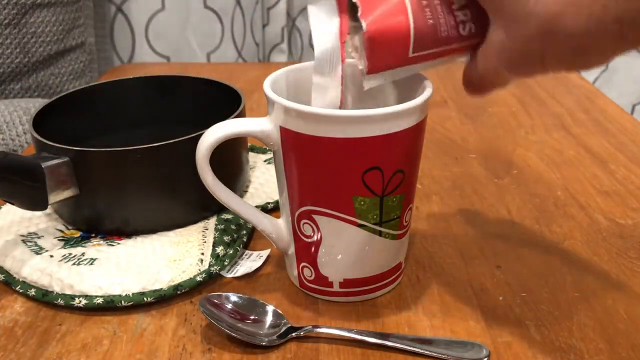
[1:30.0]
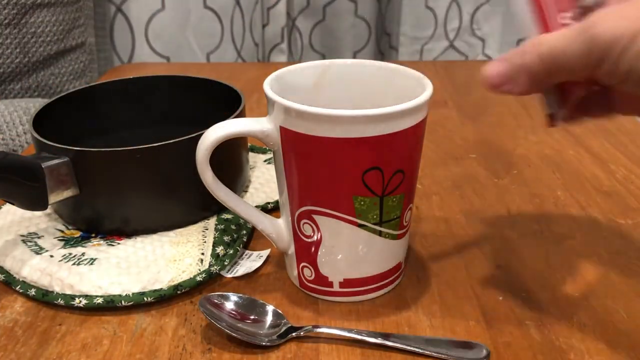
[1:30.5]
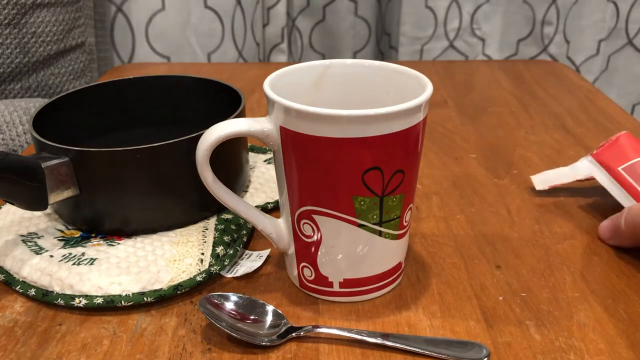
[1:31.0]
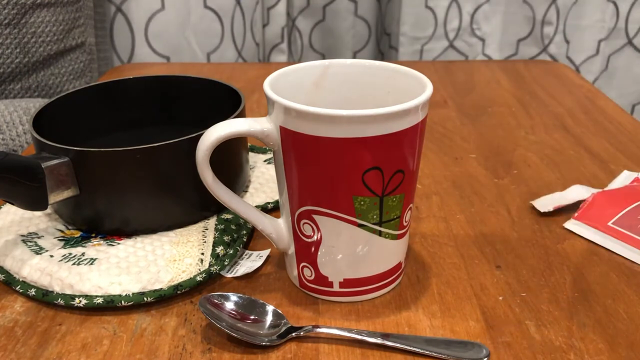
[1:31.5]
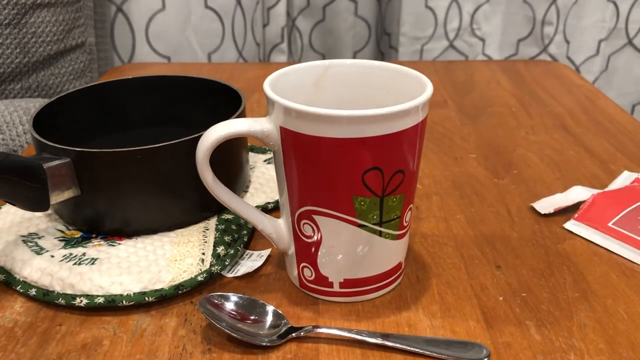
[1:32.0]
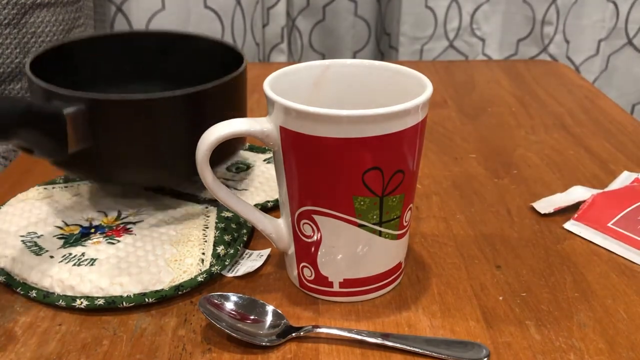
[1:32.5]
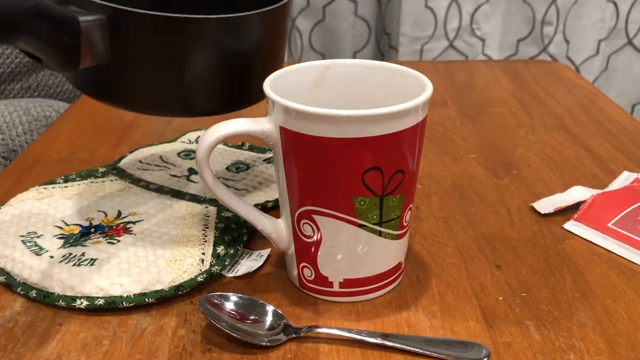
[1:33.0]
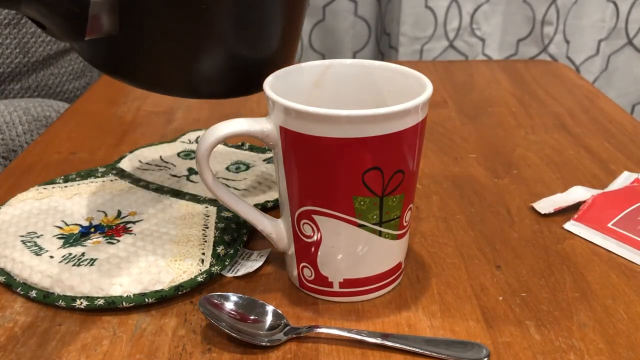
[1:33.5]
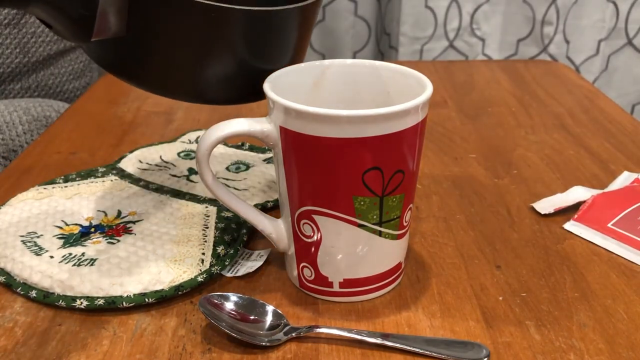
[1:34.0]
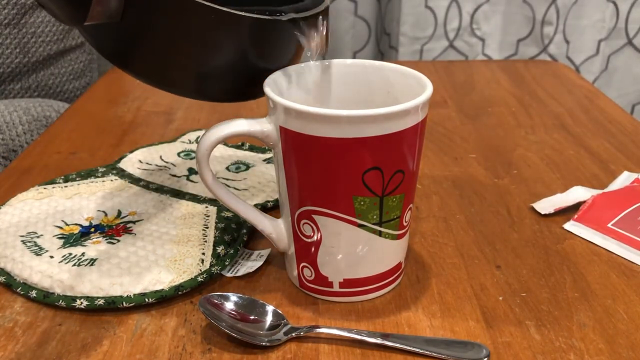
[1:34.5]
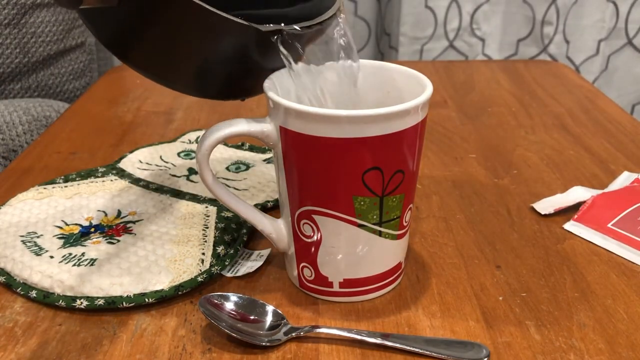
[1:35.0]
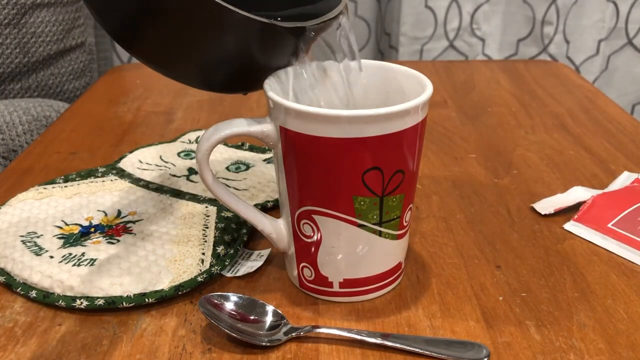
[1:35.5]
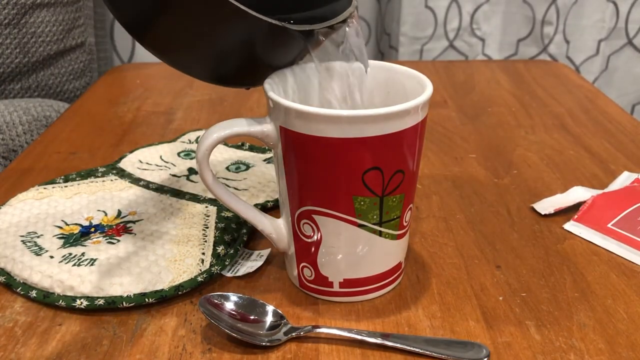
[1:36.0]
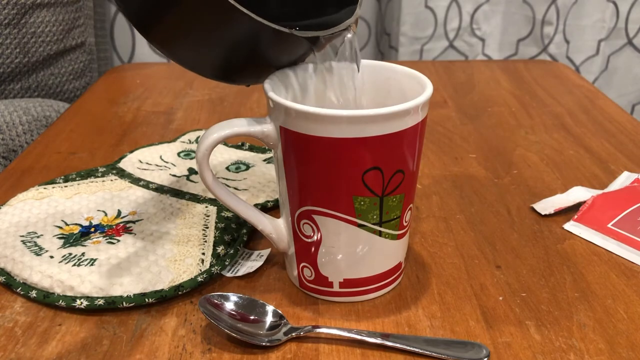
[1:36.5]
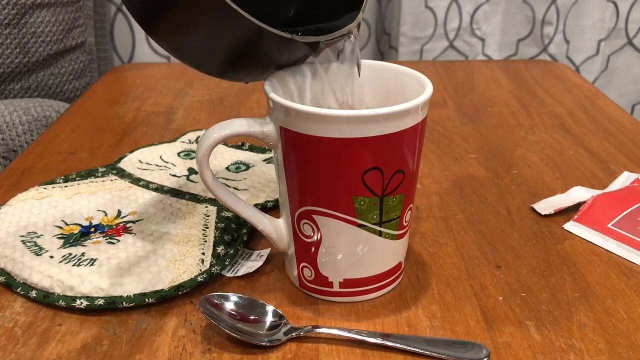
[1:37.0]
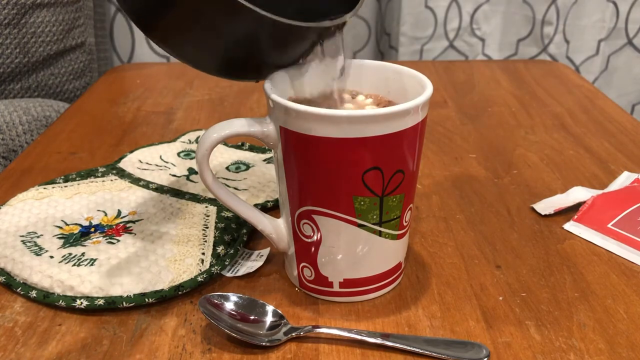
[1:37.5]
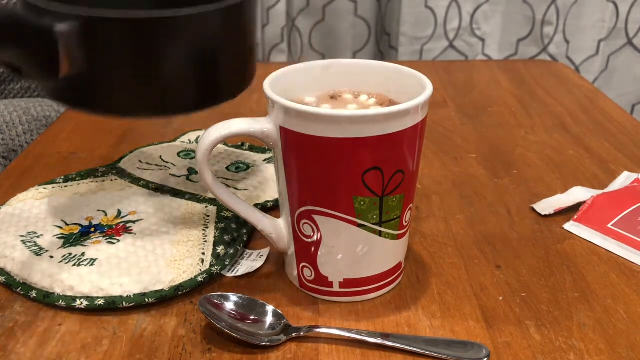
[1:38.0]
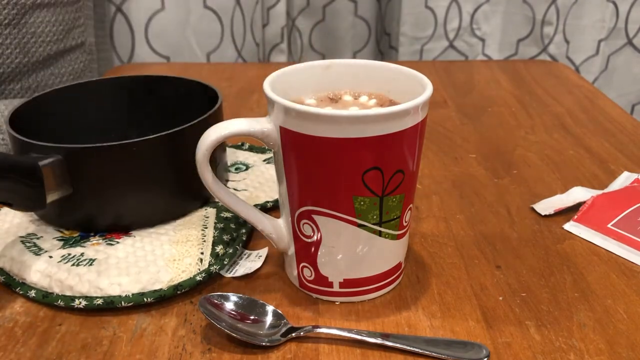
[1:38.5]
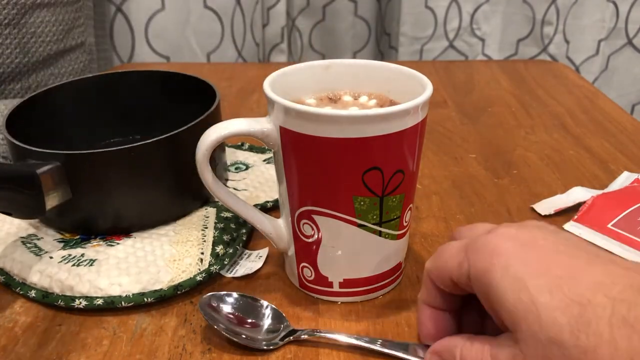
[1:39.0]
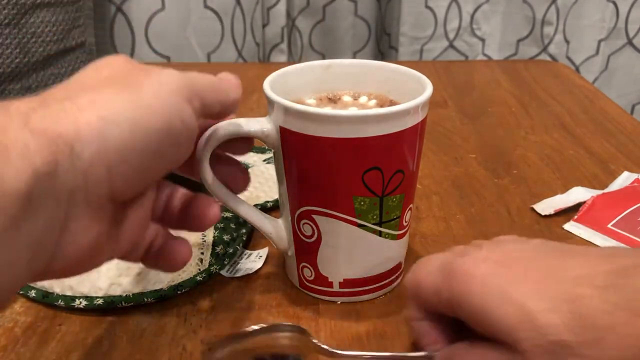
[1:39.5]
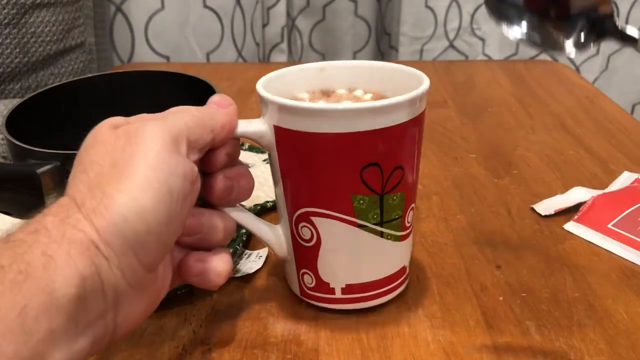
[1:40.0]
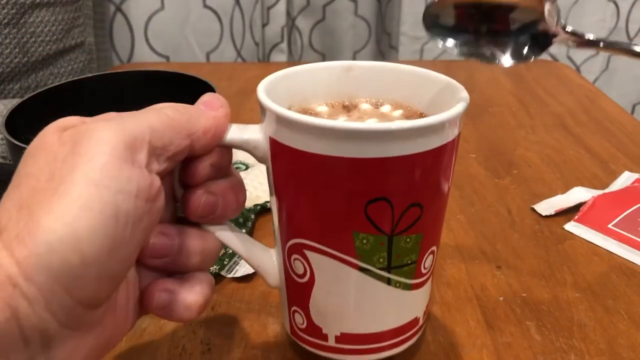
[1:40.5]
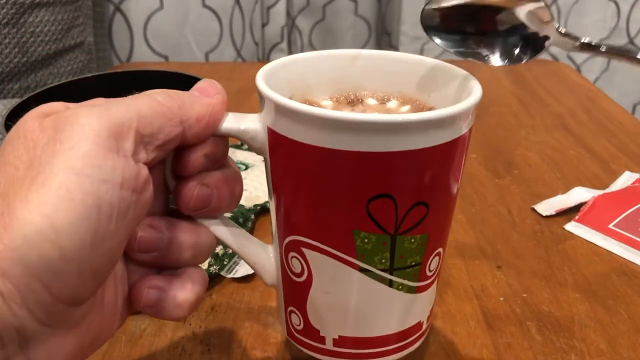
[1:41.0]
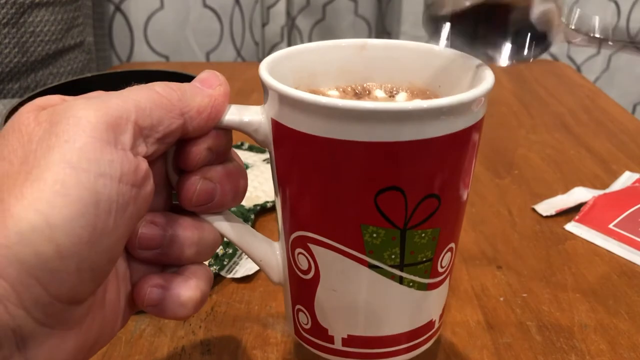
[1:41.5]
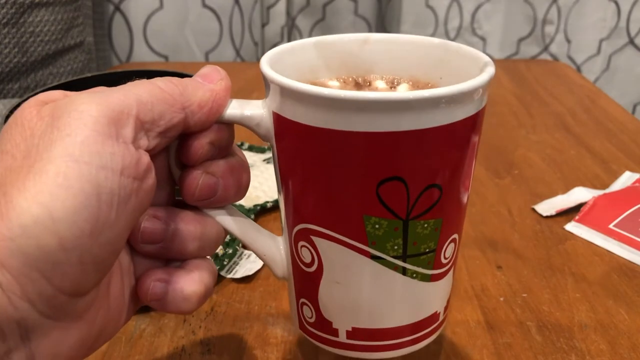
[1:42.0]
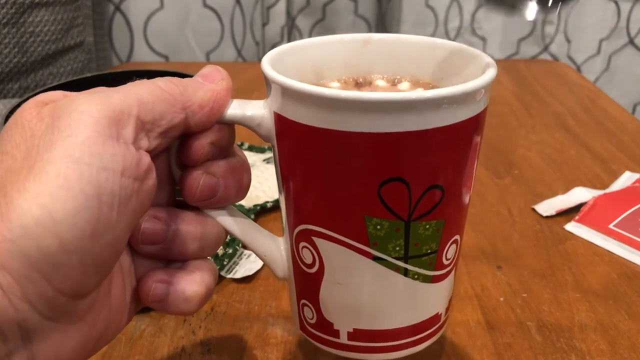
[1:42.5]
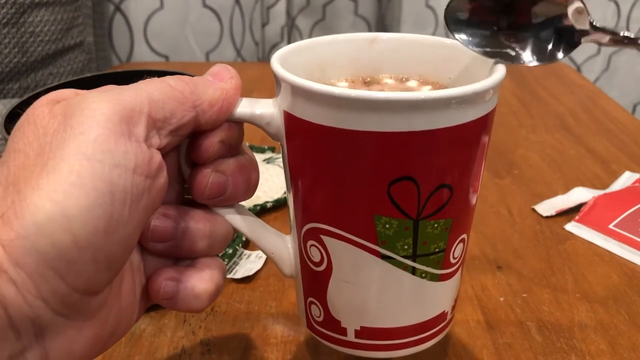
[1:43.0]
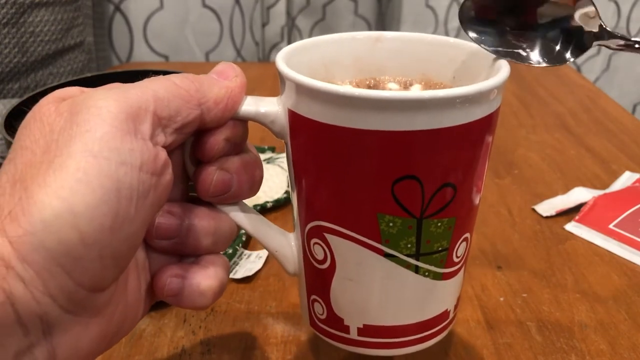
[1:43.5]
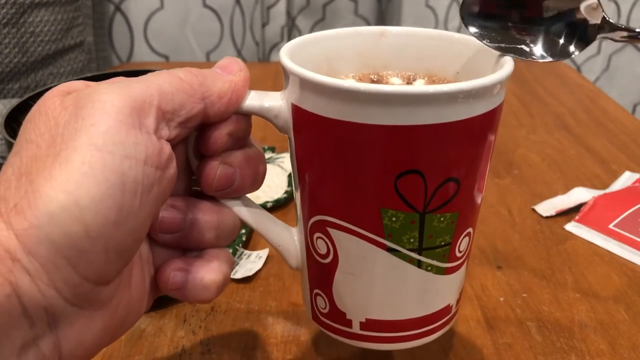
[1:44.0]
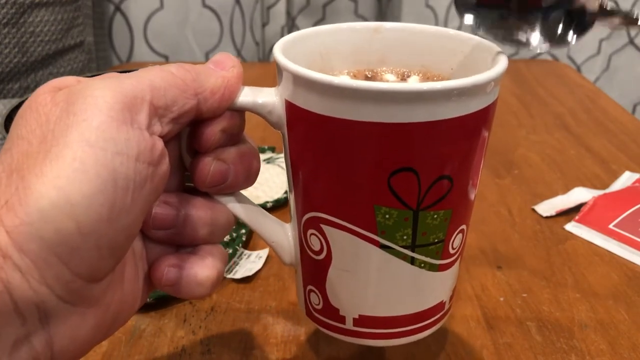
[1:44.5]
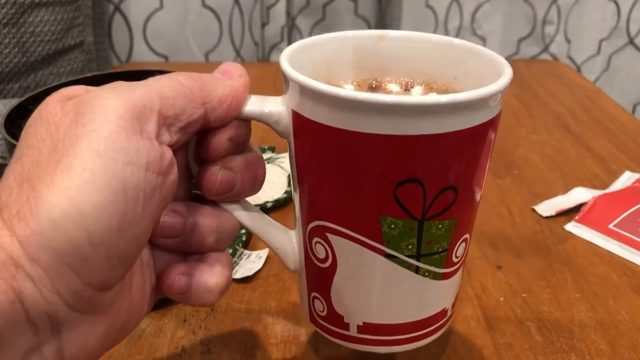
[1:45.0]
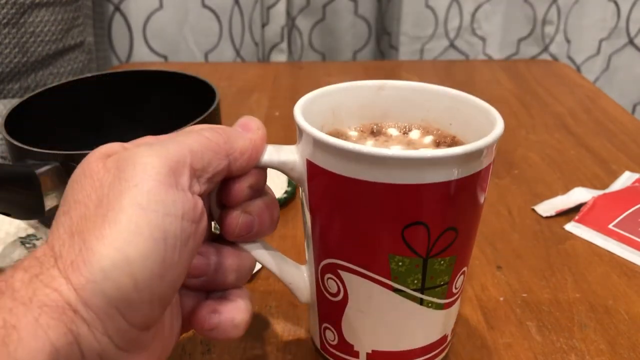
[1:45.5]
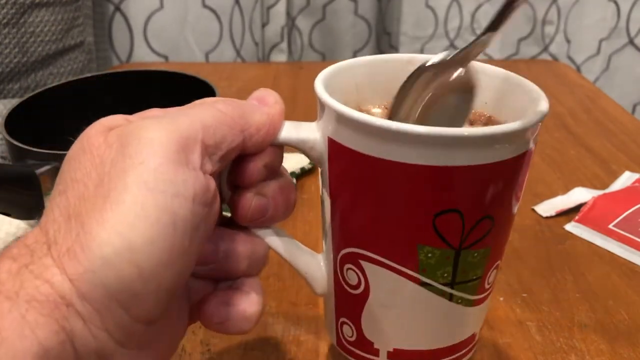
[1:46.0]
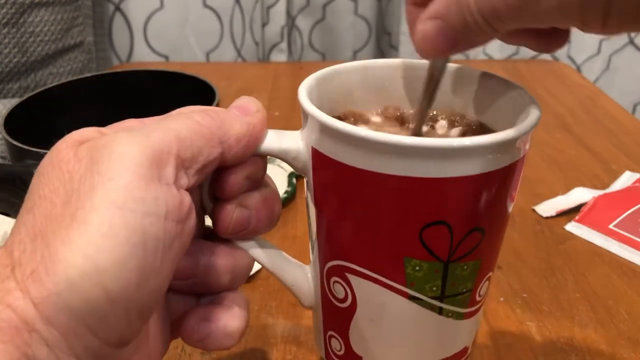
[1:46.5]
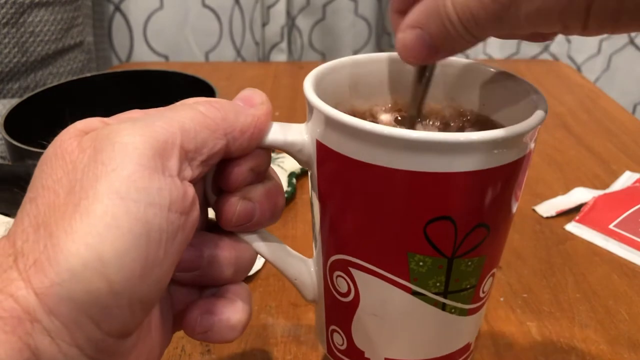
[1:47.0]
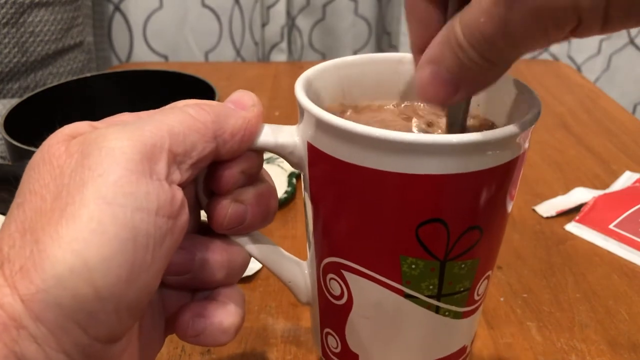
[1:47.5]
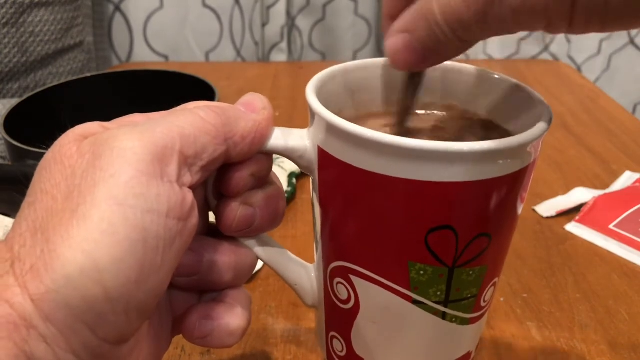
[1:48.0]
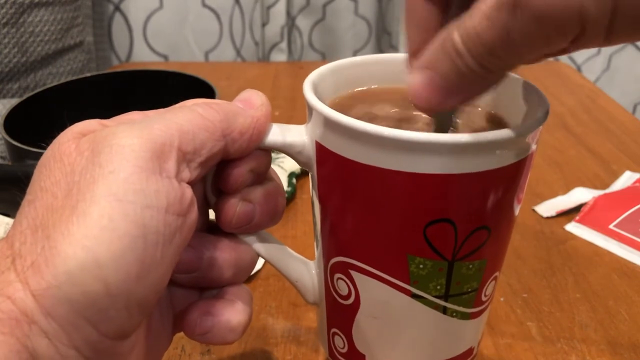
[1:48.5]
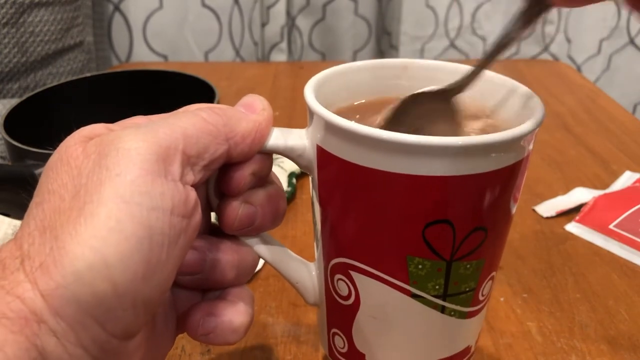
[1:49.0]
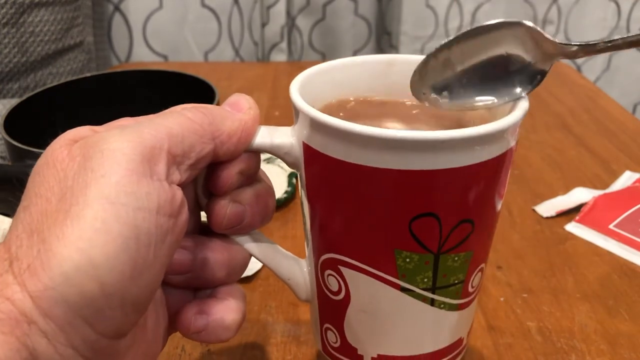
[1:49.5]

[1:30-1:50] The video seems to go over the same motions as before. The person grasps the packet between thumb and forefinger, pulls it open with their right hand, and carefully empties the contents into the mug. They then very carefully pour the hot water from the pot on the left-hand side into the mug until it is about half an inch from the rim. They pick the mug up, tap it 11 times, and swirl the contents again. No text or captions are overlaid to explain the repetition.